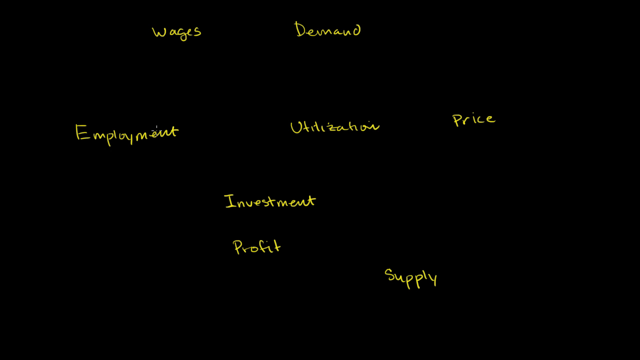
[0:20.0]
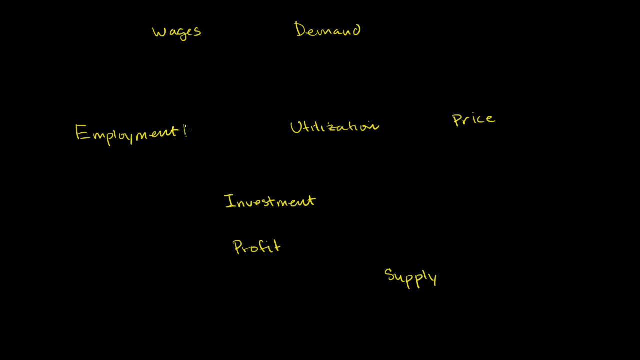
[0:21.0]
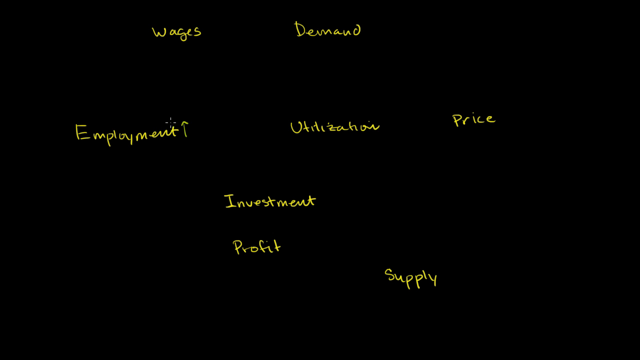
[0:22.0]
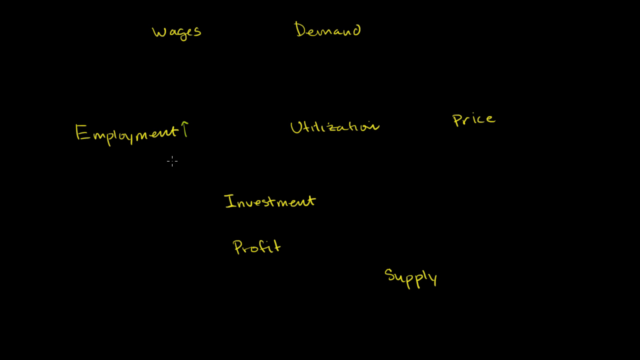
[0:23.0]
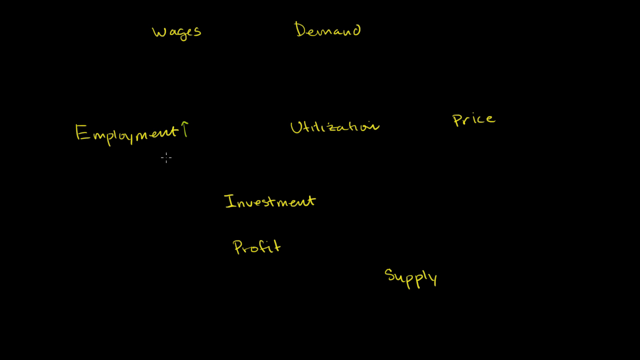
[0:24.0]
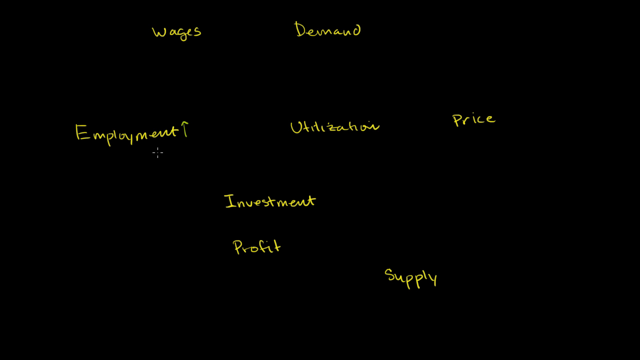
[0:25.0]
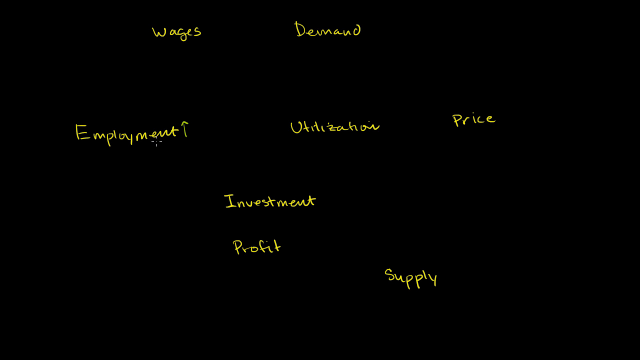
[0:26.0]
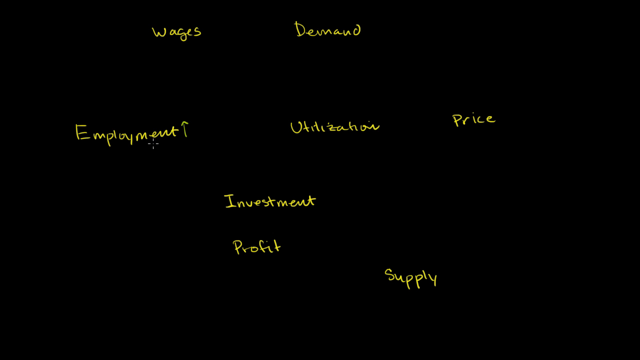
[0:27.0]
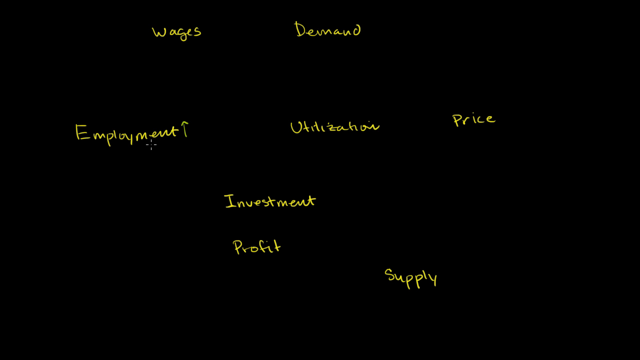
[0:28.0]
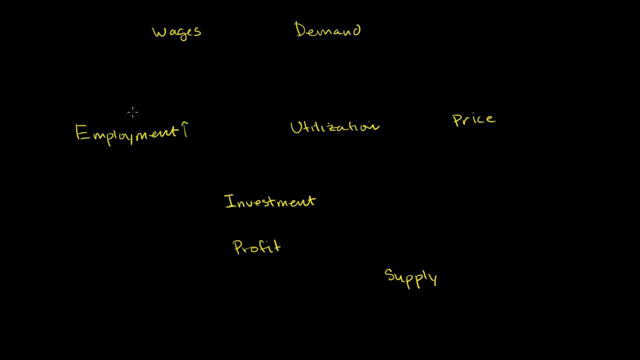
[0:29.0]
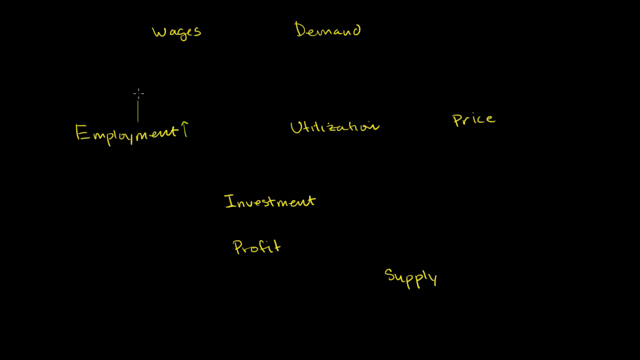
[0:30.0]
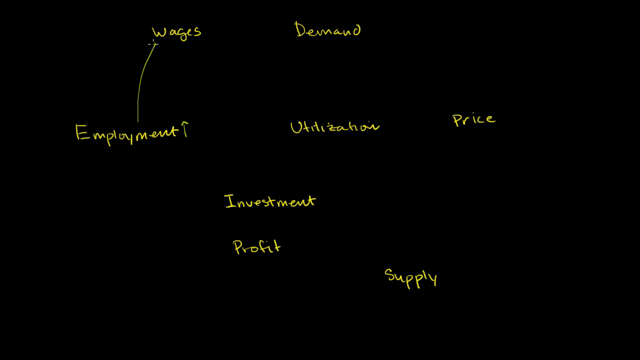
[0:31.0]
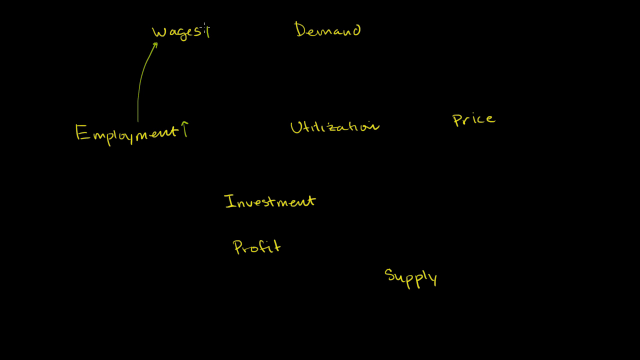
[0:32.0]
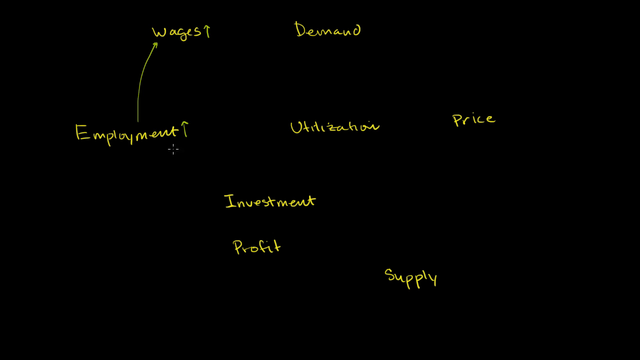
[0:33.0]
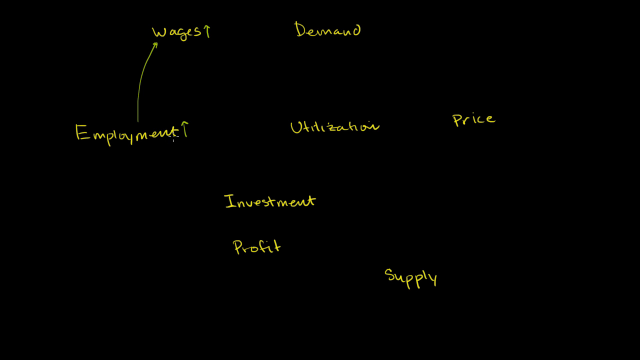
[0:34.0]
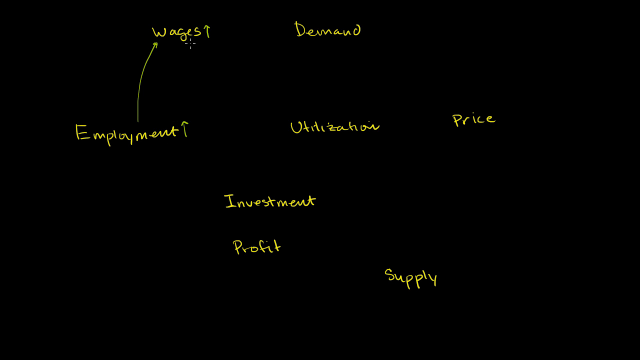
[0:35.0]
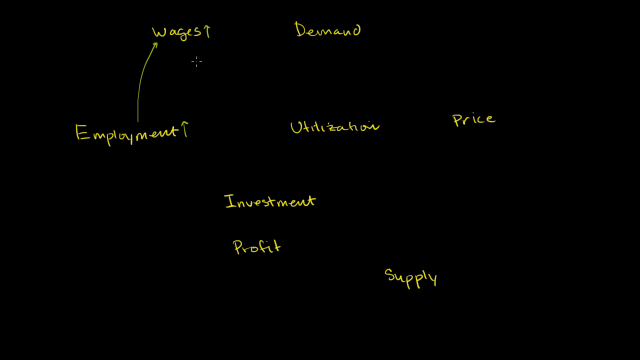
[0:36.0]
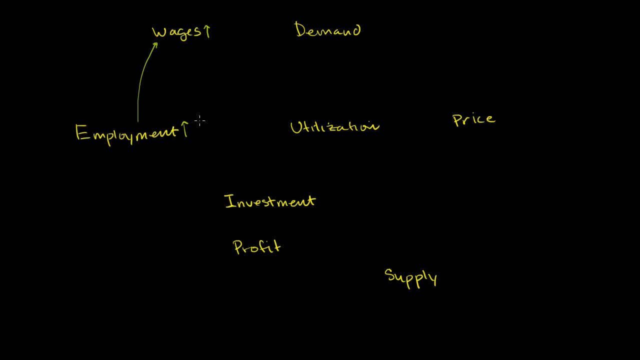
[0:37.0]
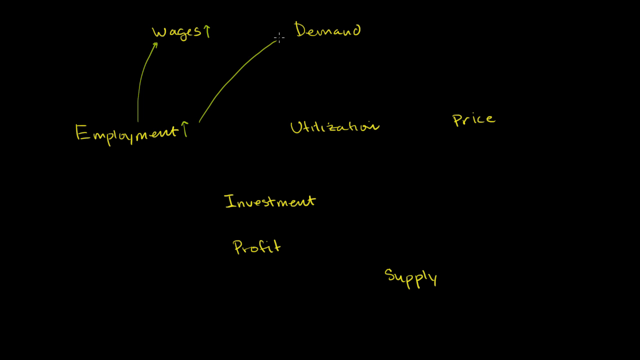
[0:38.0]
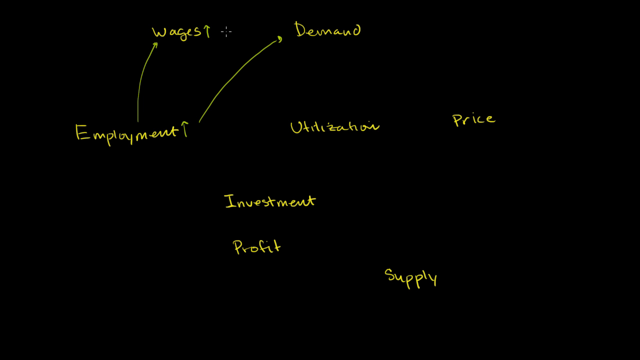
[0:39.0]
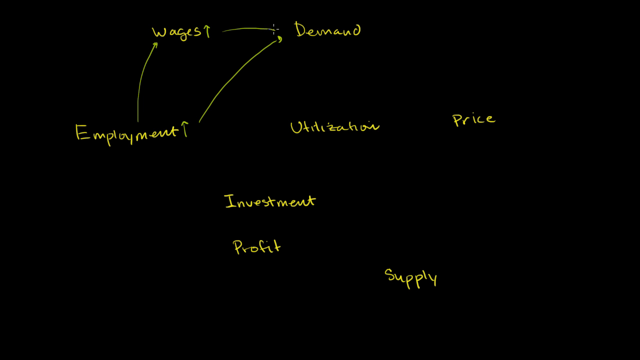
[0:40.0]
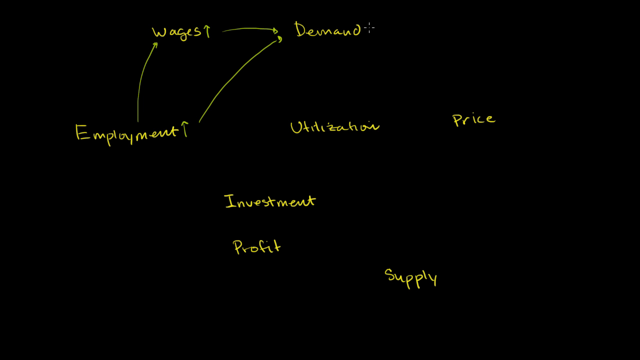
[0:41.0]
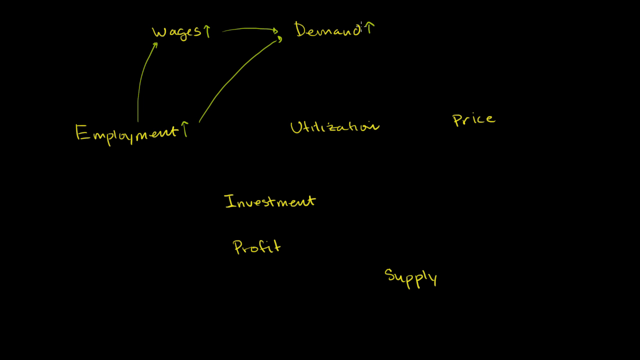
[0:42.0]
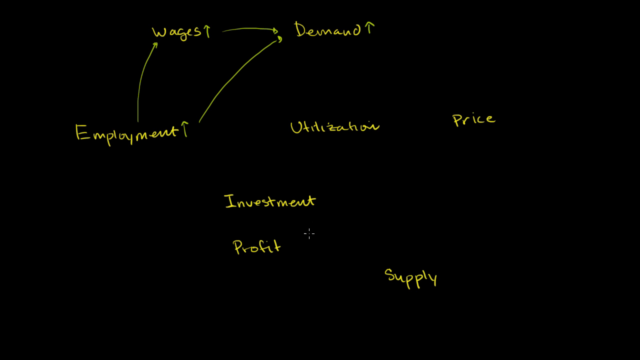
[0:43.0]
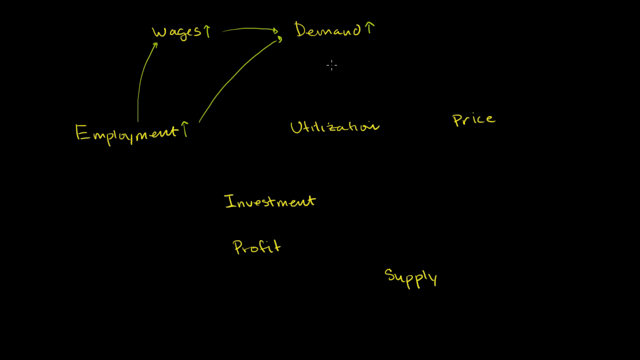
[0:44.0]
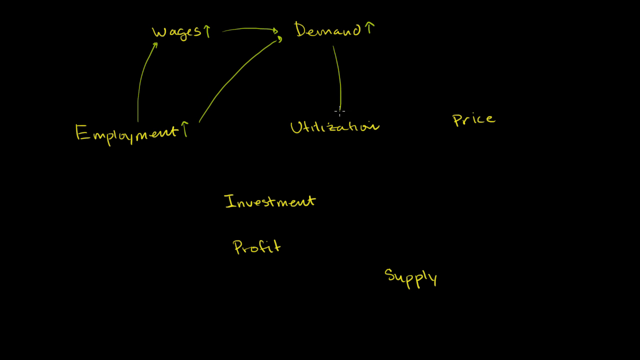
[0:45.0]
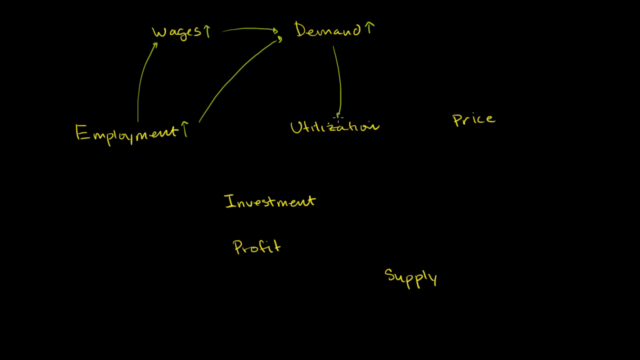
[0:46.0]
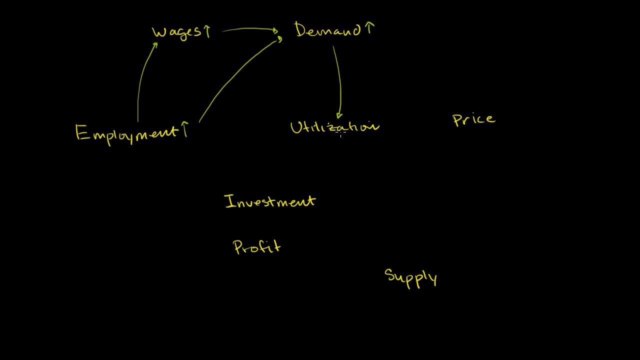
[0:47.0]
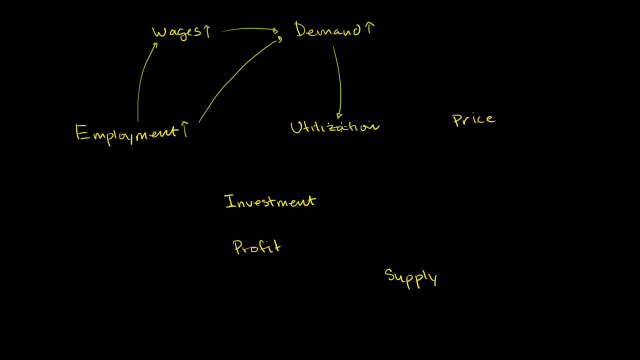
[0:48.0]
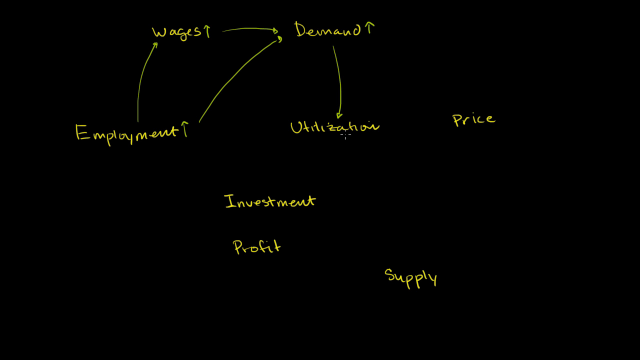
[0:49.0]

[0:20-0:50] The black screen still shows the yellow words: "Wages" and "Demand" at the top, "Employment," "Utilization" and "Price" in the middle, "Investment" below, "Profit" below that and "Supply" below that. Yellow arrows now connect them: a line goes up from "Employment" to "Wages," an arrow goes from "Employment" up to "Demand," an arrow goes from "Wages" to "Demand," and a line goes down from "Demand" to "Utilization." Next to "Wages," "Employment" and "Demand" are three small arrow symbols, separate from the arrows connecting the words, apparently to indicate something on the rise.